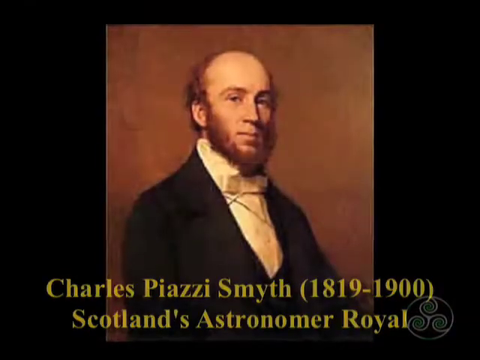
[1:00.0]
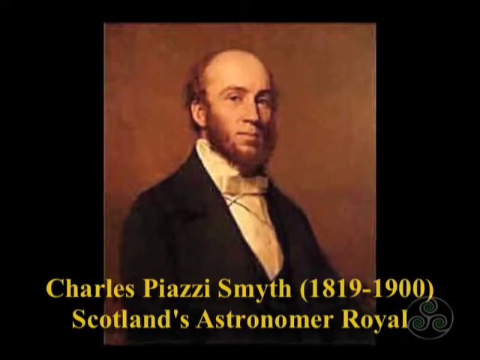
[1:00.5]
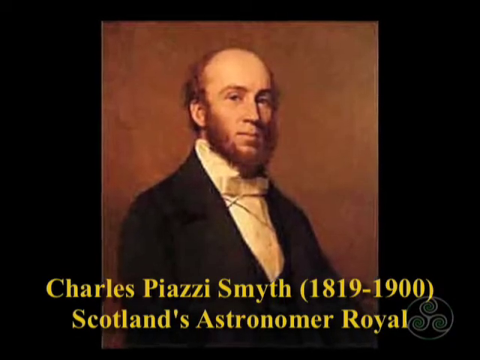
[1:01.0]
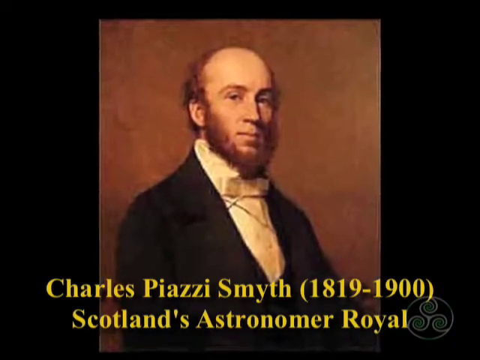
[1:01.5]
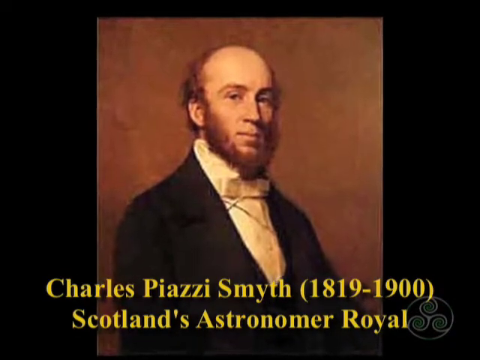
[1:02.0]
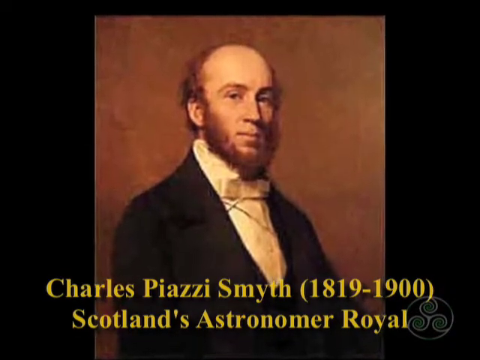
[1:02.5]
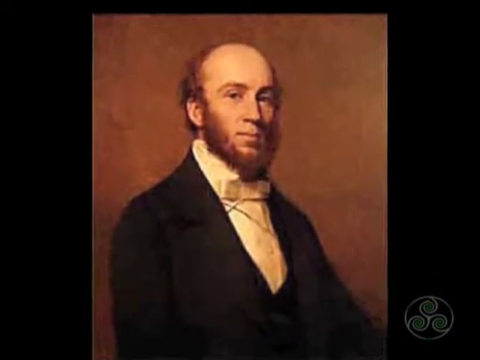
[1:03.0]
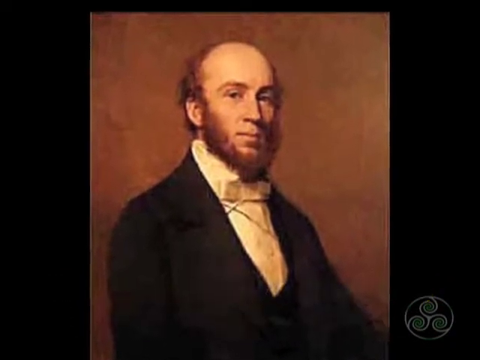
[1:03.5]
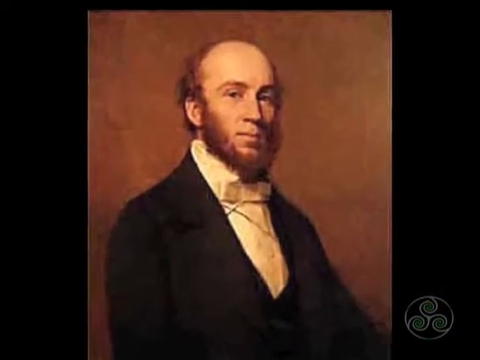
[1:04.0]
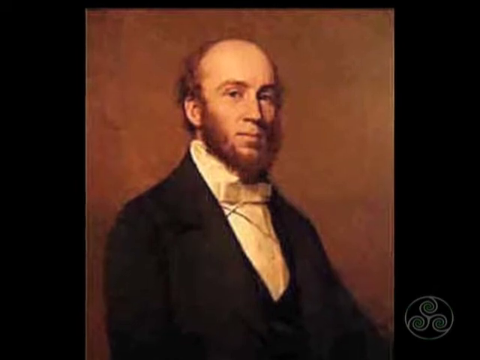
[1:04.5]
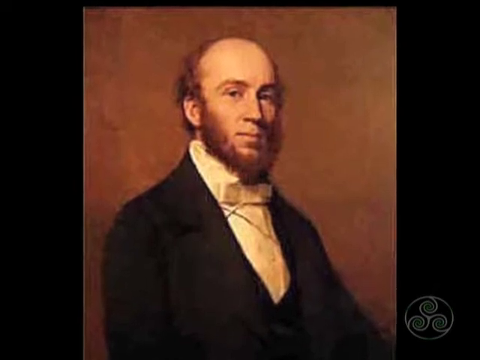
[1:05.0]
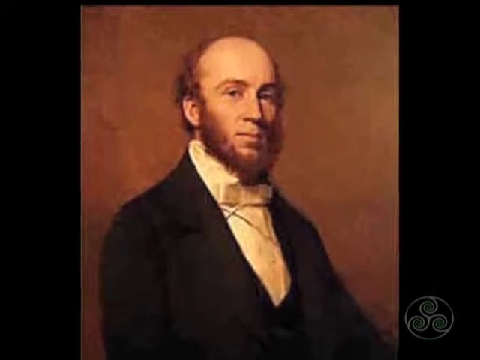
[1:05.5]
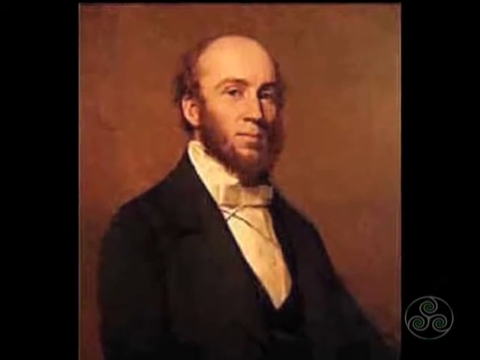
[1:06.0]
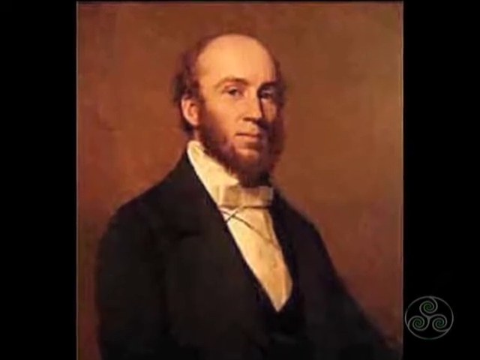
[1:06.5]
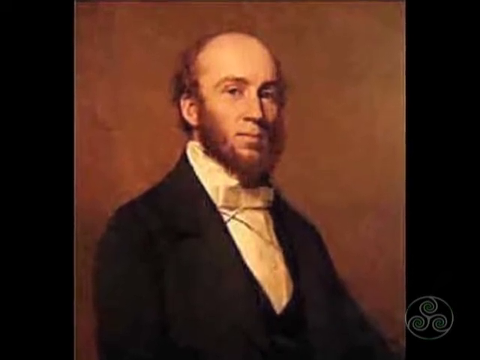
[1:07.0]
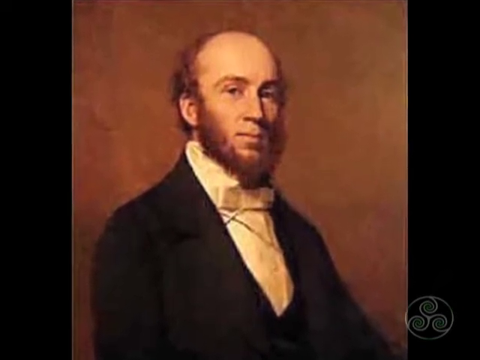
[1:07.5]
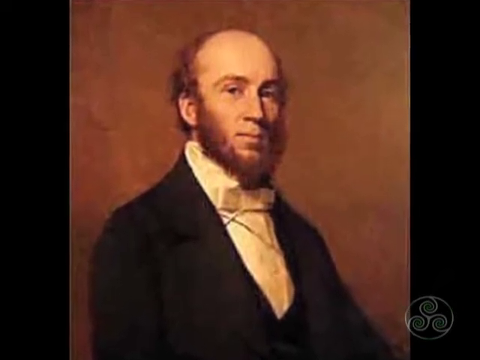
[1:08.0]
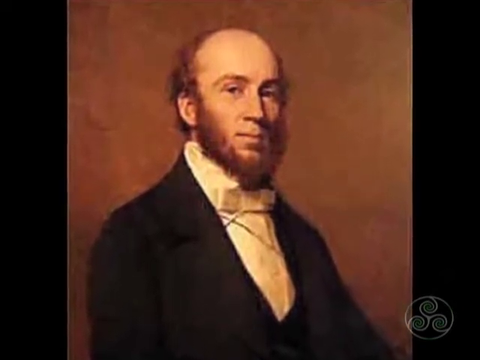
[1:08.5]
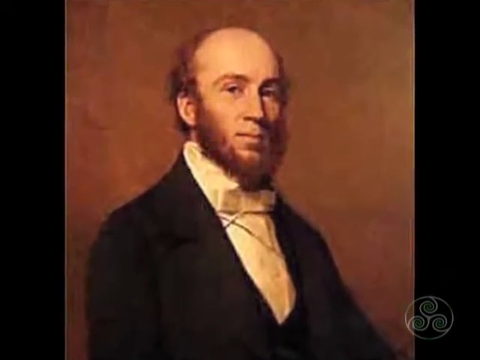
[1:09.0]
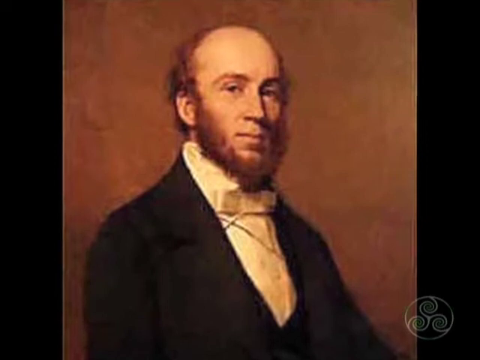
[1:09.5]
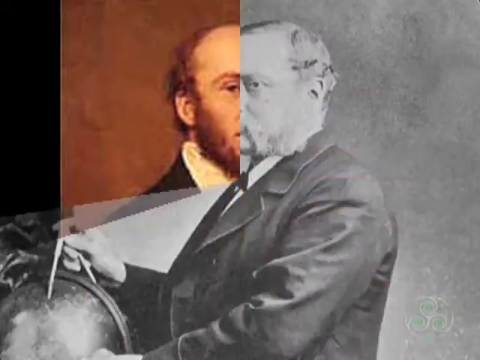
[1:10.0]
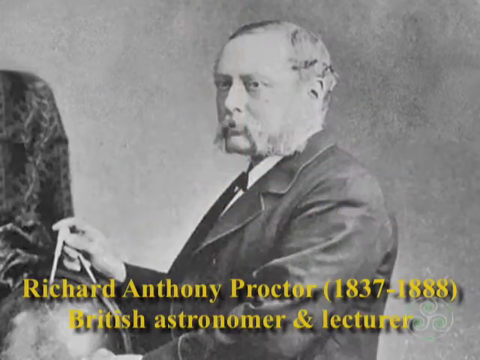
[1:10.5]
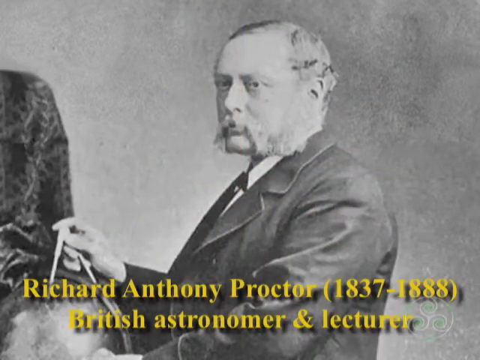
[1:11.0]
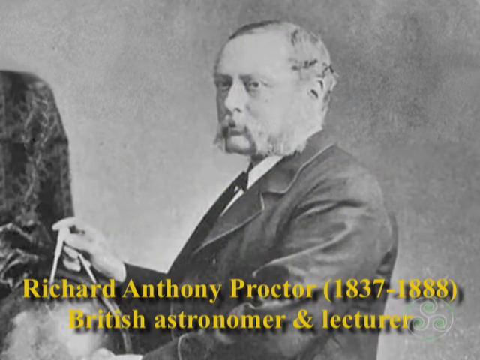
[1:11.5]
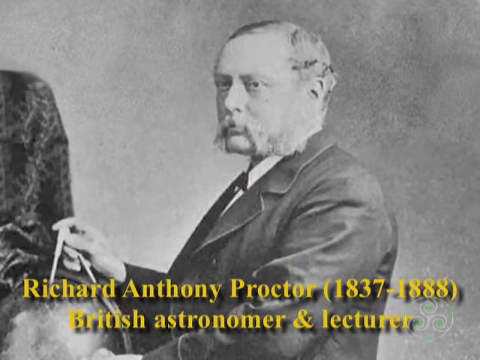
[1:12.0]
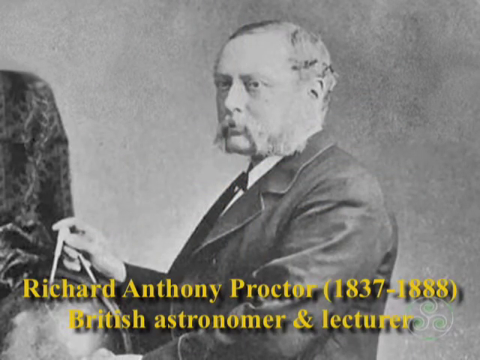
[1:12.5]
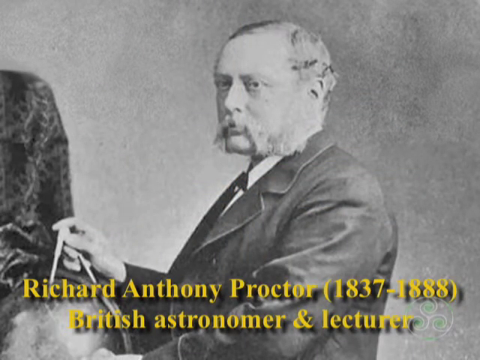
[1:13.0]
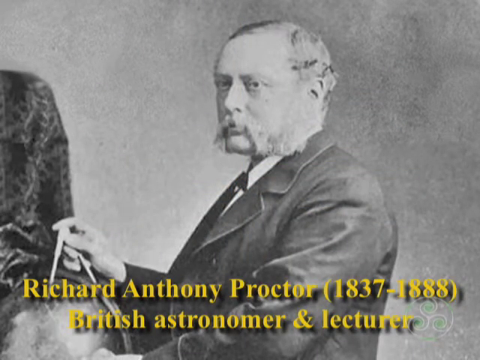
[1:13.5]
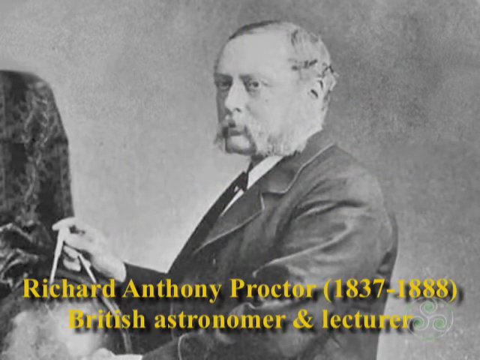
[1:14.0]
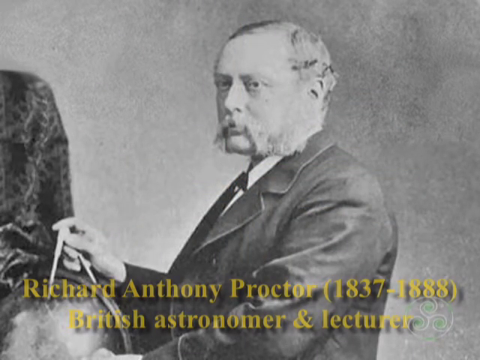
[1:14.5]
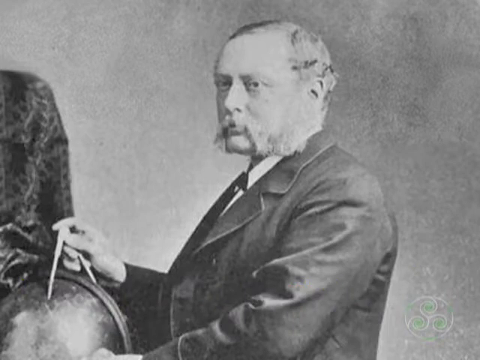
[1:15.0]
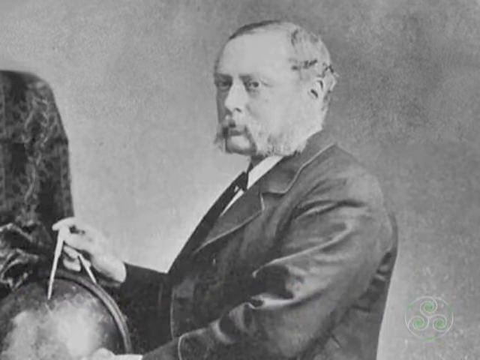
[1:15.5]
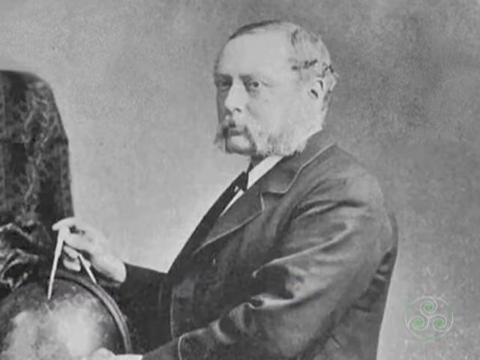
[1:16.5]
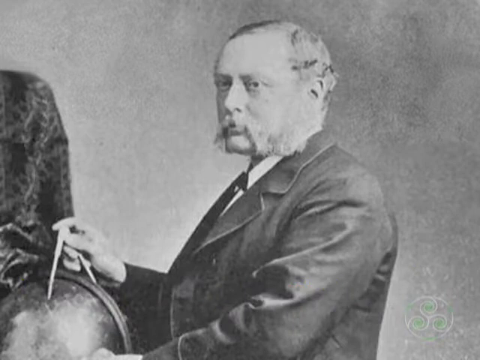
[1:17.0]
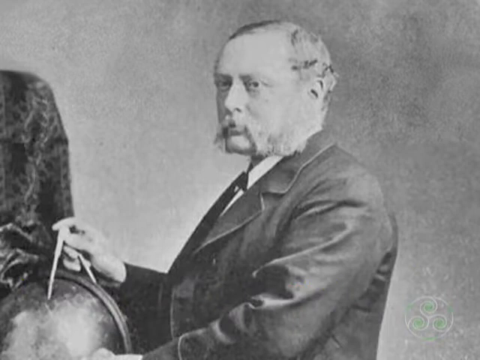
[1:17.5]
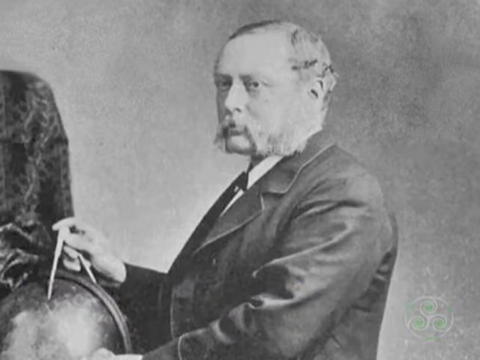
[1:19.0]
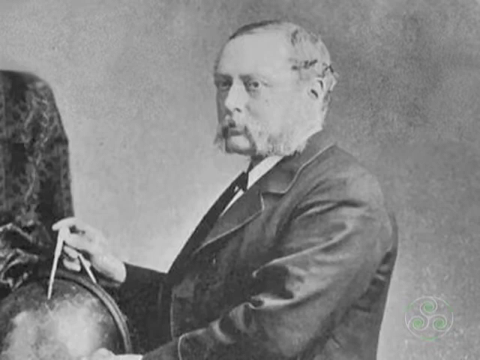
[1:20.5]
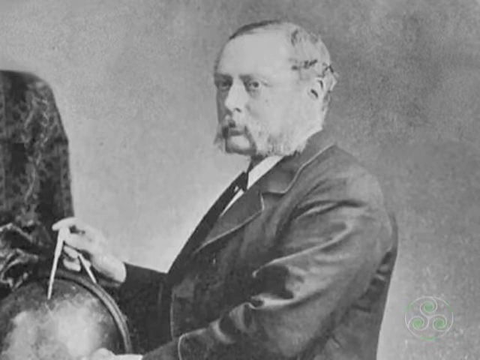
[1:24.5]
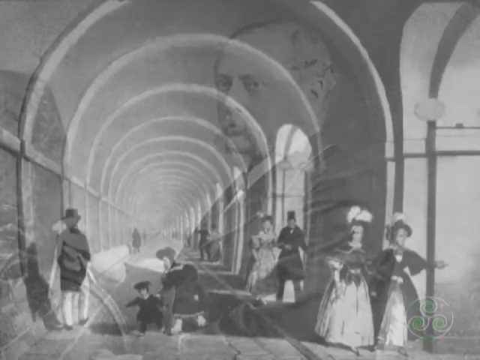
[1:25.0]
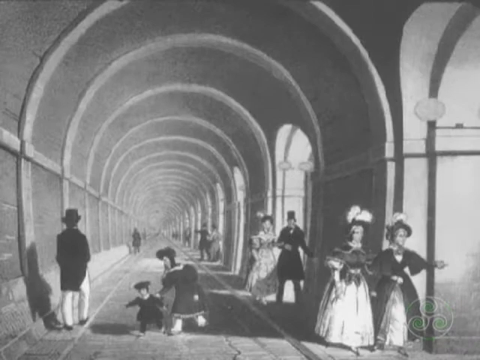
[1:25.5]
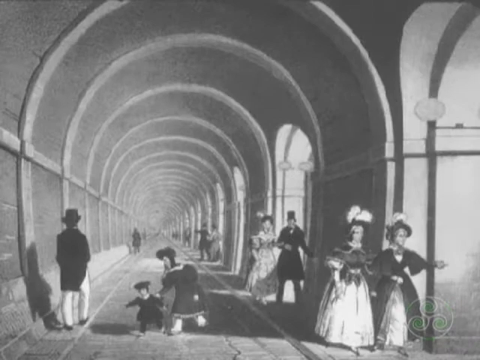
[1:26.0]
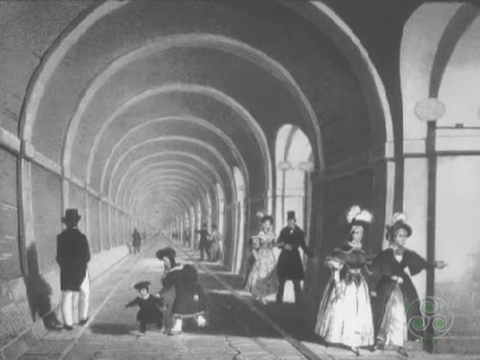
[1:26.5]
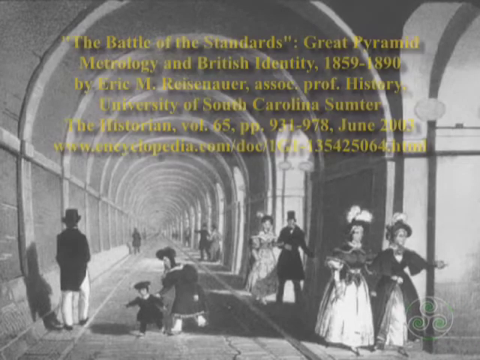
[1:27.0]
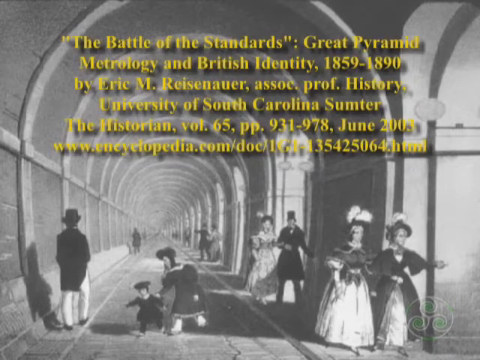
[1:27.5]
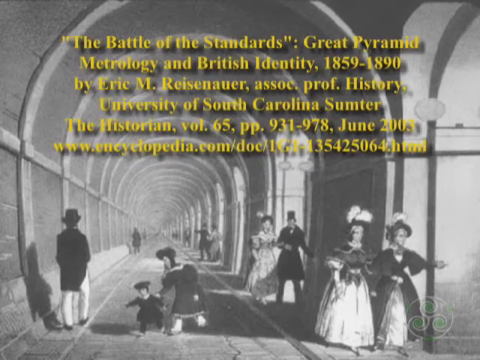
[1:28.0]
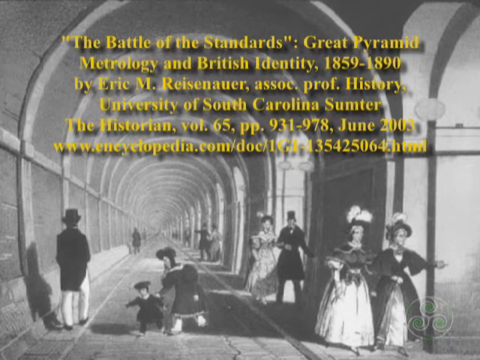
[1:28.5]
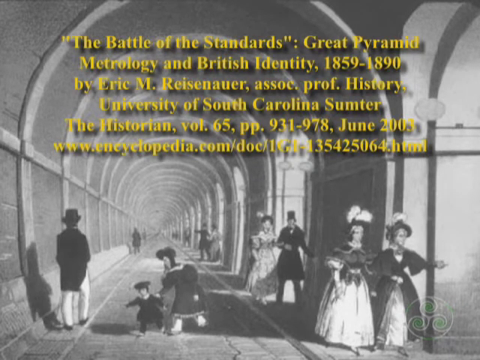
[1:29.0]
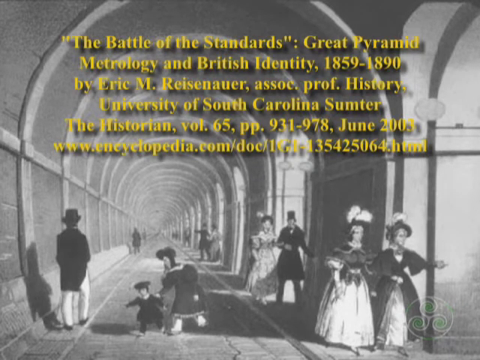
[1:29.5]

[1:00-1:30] A scene shows Charles Biazzi, a white, bearded strongman looking directly into the camera. The British astronomer and lecturer Alan Smith is then shown in black and white, working with his hands on some objects, including some type of emblem. Text then reads "The Battle of the Sands, Ray Freeman, and Charles Biazzi."